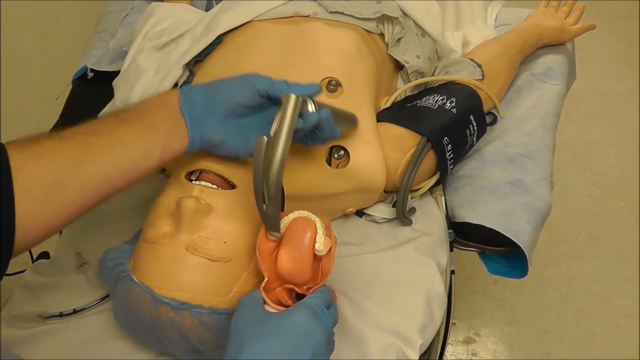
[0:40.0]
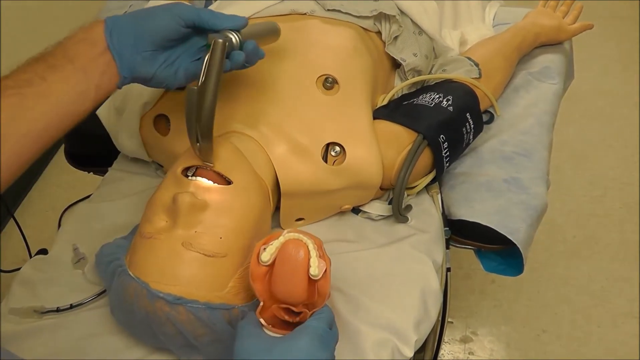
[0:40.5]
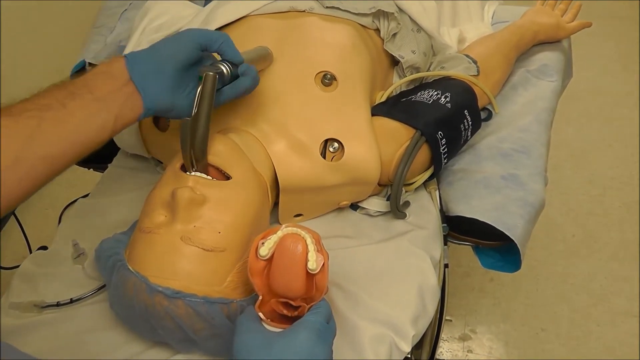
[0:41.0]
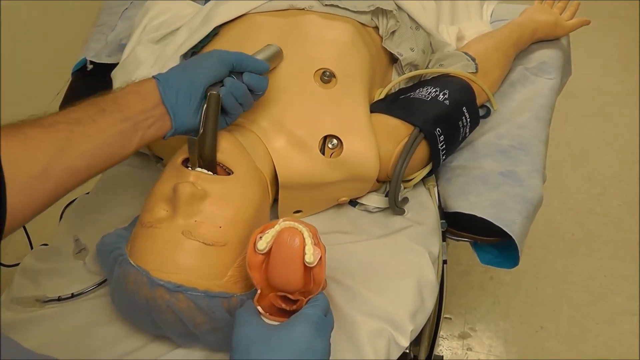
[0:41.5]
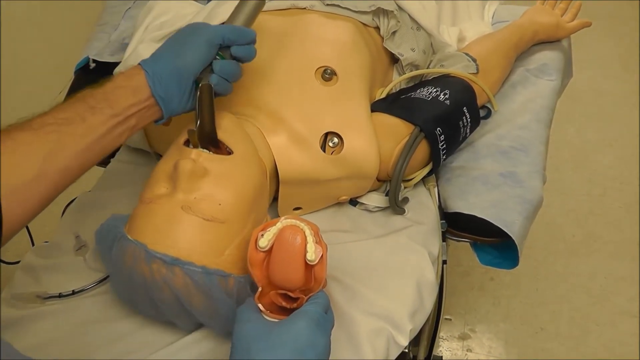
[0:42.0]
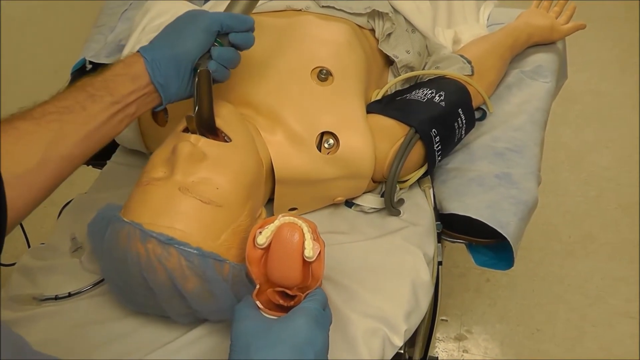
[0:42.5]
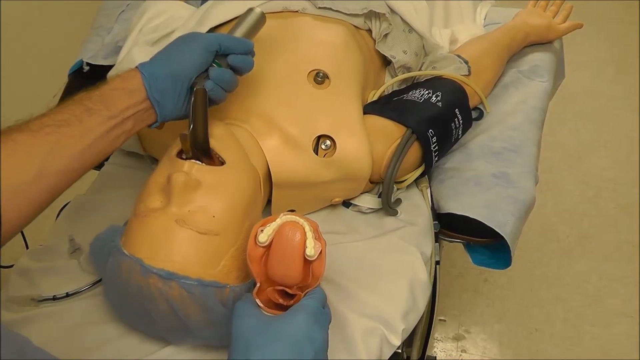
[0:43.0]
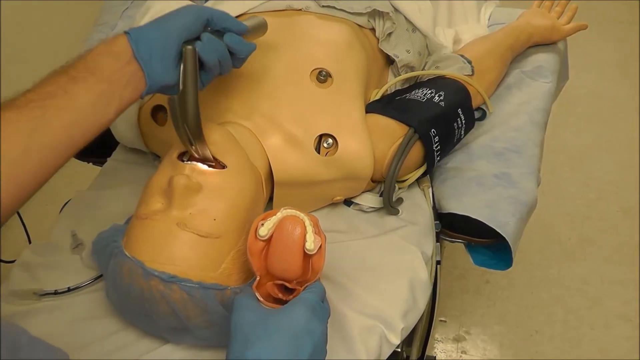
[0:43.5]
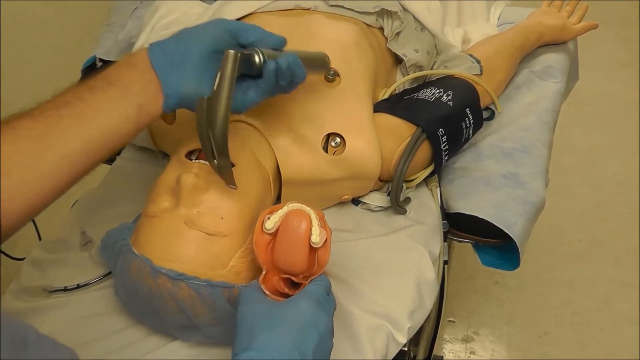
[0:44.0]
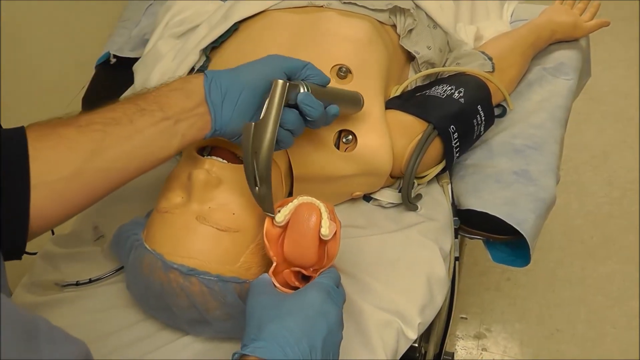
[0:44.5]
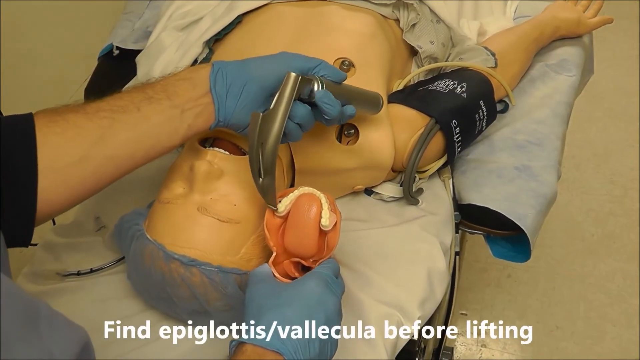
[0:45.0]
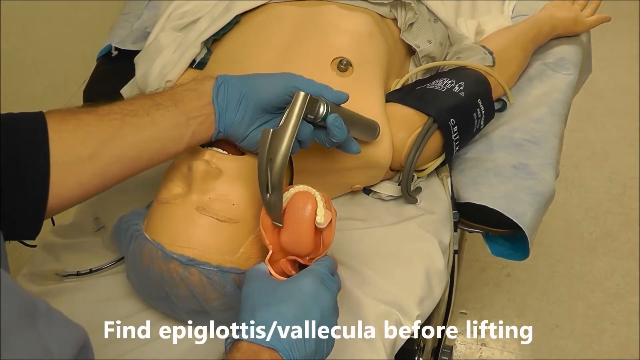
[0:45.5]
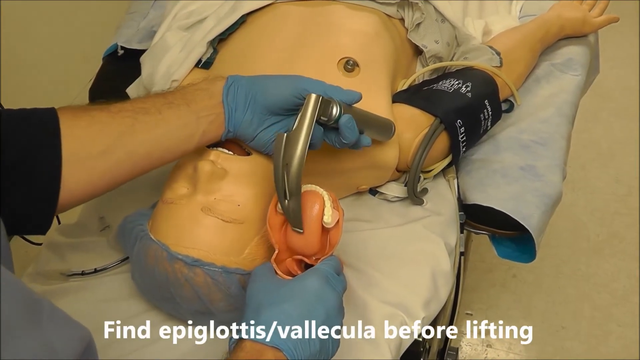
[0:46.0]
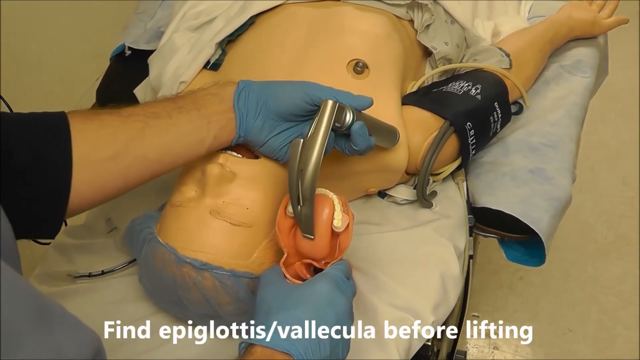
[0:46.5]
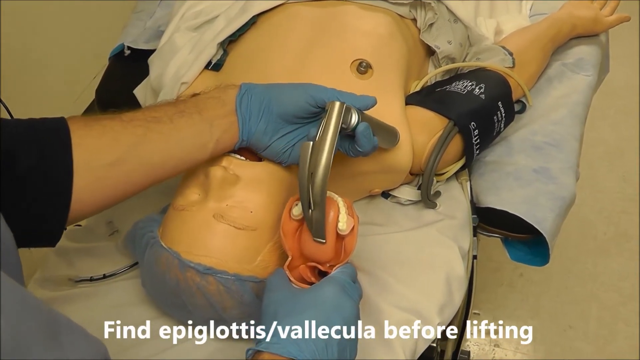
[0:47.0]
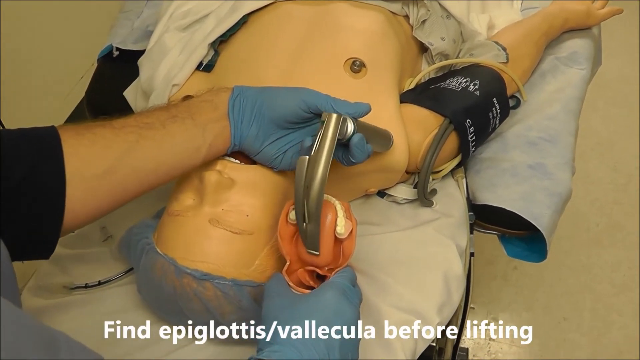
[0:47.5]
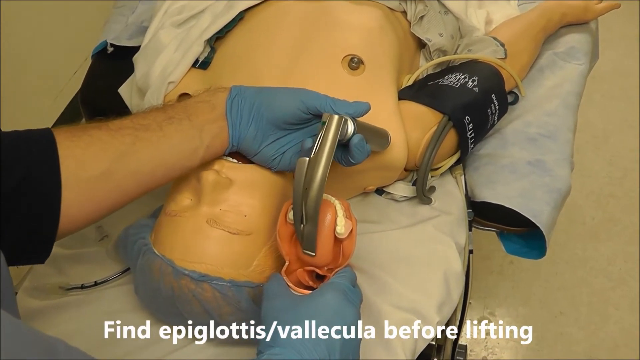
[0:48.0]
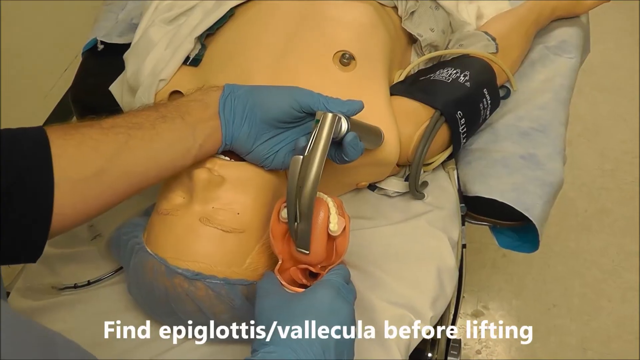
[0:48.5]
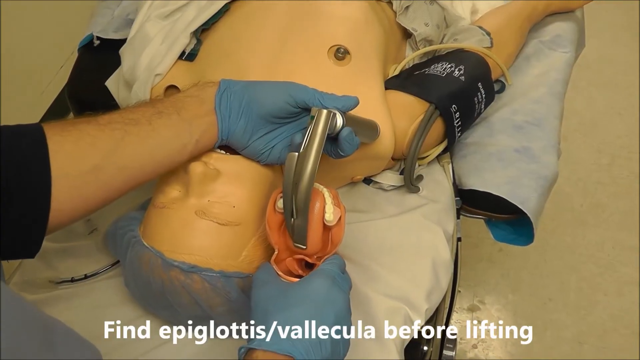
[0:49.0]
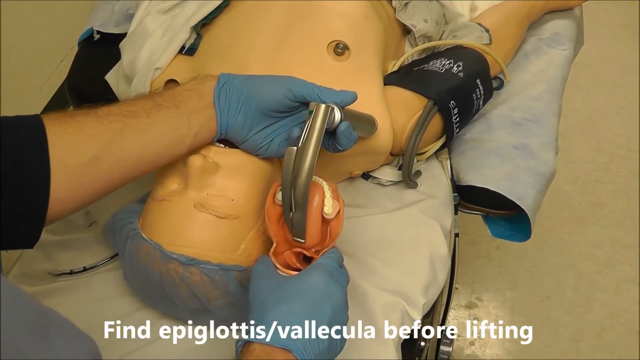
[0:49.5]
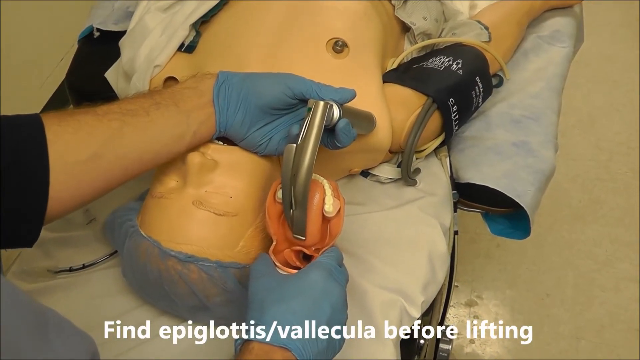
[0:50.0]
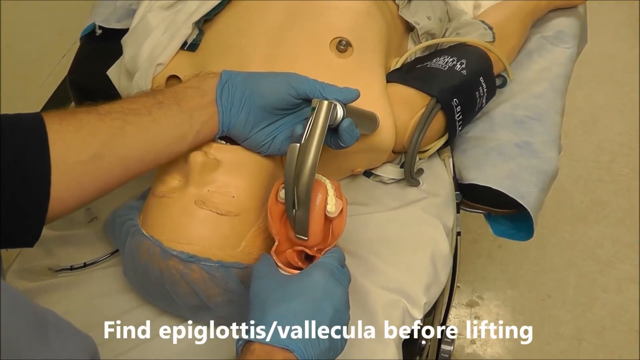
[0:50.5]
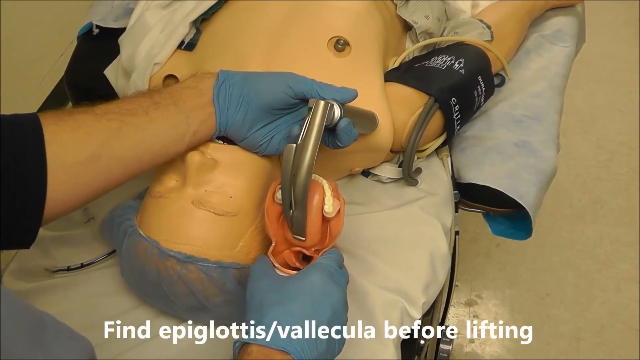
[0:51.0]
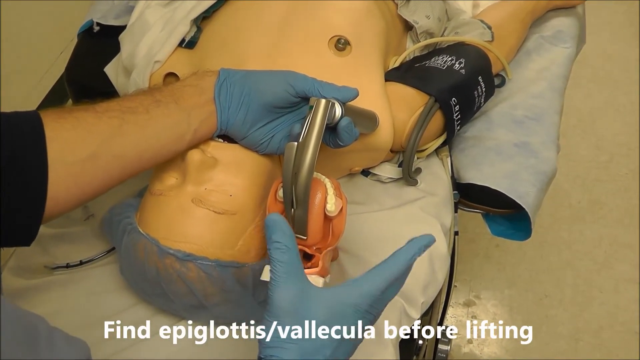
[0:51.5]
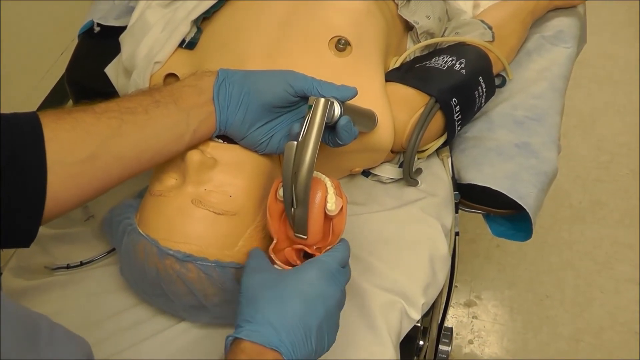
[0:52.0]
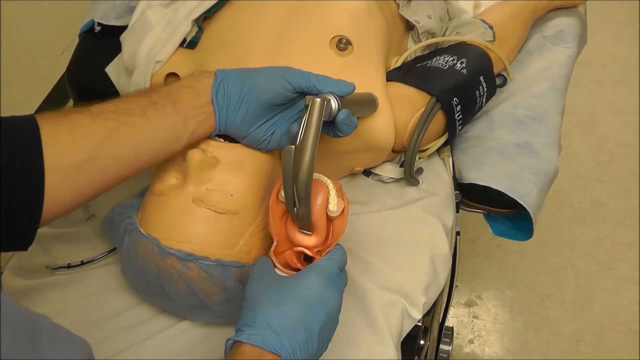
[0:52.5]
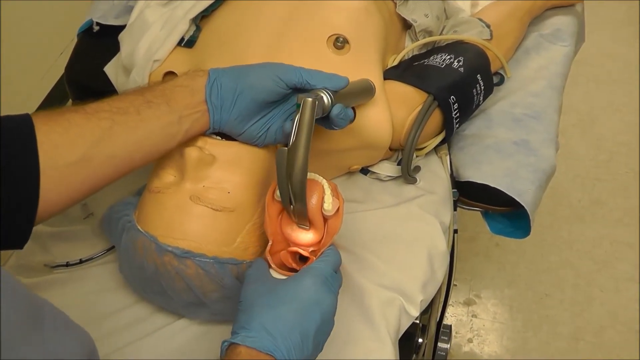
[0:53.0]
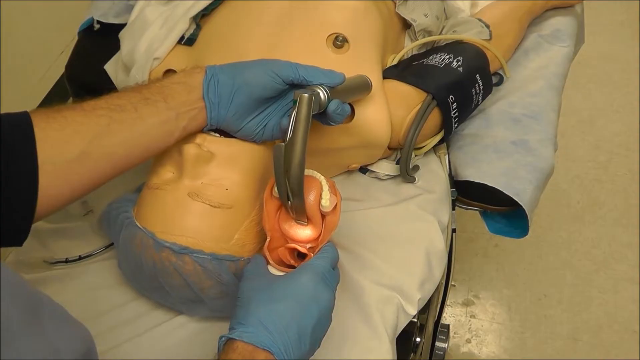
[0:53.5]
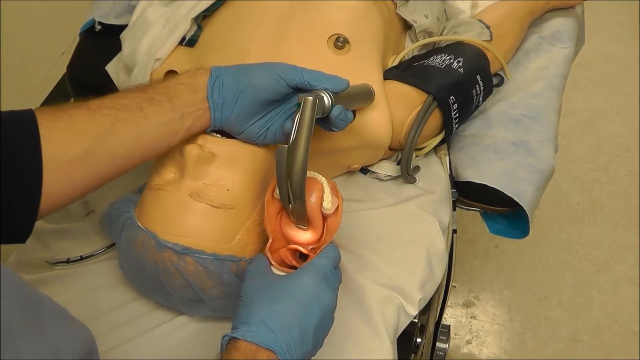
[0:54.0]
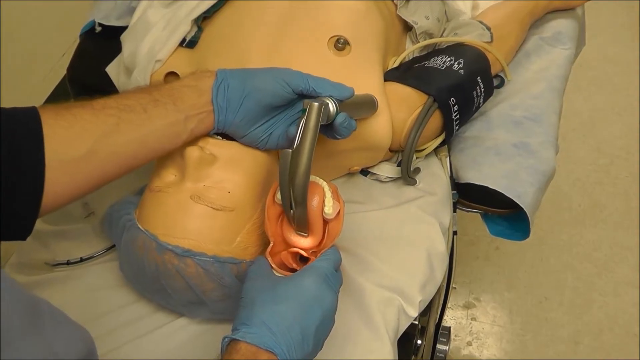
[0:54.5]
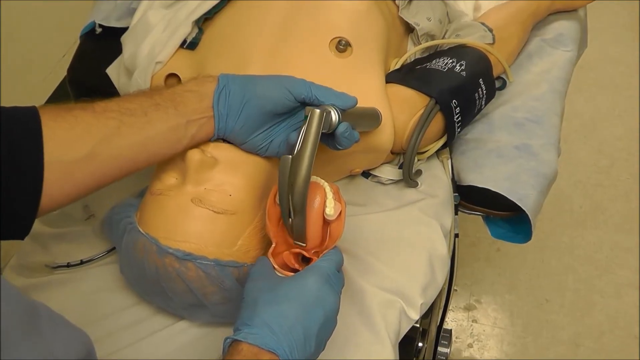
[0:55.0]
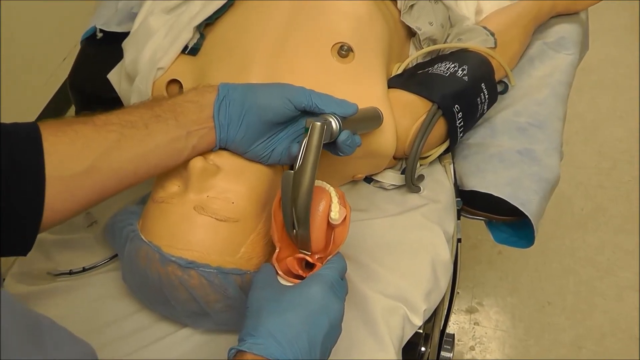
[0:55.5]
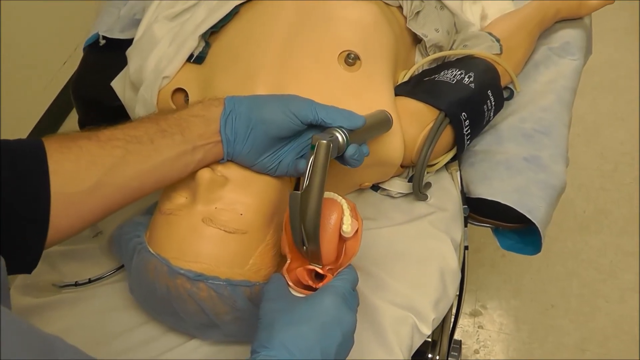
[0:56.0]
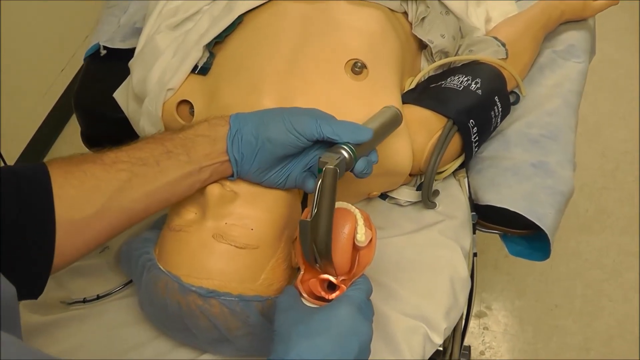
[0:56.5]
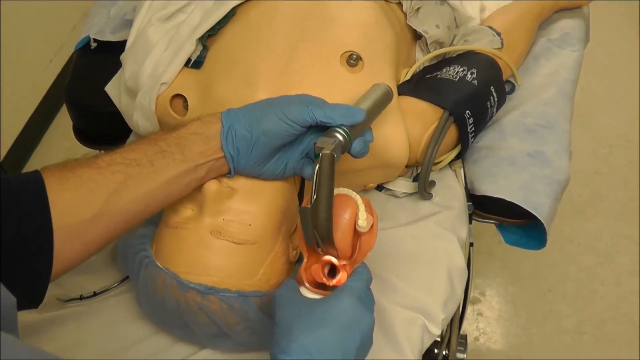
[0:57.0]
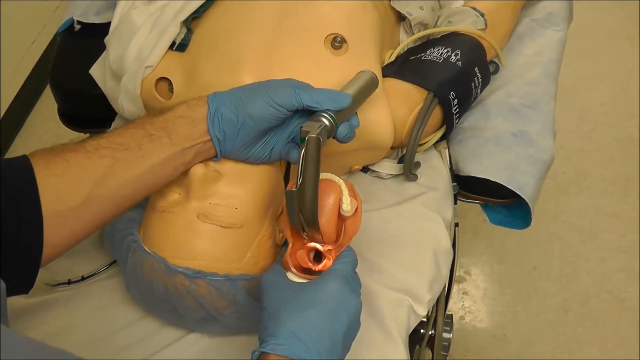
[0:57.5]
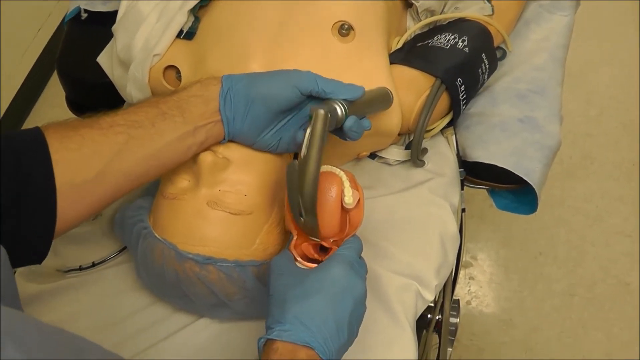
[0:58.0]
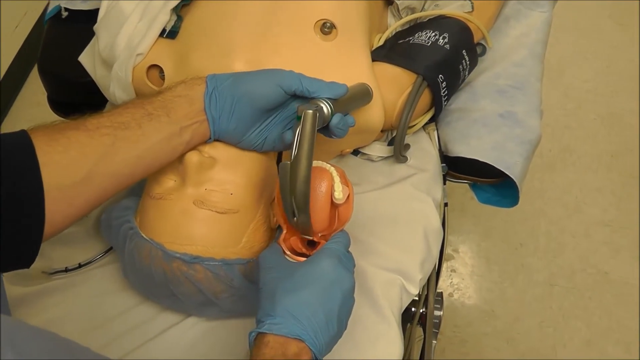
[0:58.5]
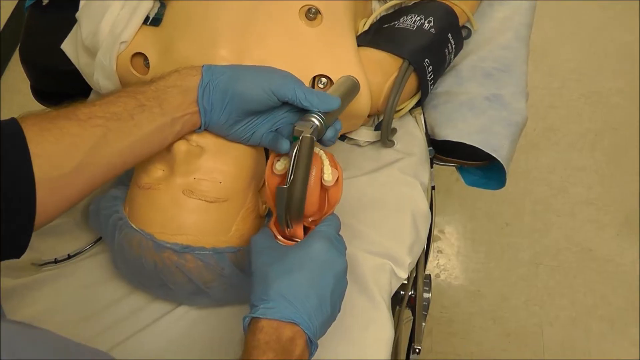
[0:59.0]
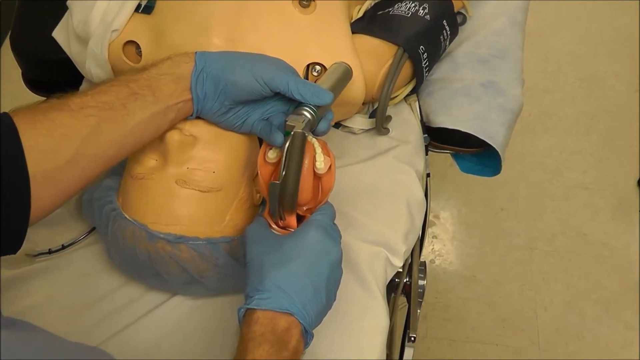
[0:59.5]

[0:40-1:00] The dummy lies on the gurney, and the hands and arms of the person doing the mac intubation are visible, along with a model of the mouth. The gray instrument appears to have white on its end. He moves it from the model to the dummy's mouth, inserts it, and uses it as leverage to pull up on the mouth. On-screen text begins "find epiglottis" and ends "before lifting." He then puts the instrument back into the model of the mouth and shows how it is inserted into the back of the throat, lifting up. The dummy has a blood pressure cup attached, a blue net on its head, and a white shirt that is partially on and partially off. There are two holes in its chest, and its mouth is open and its eyes are closed.